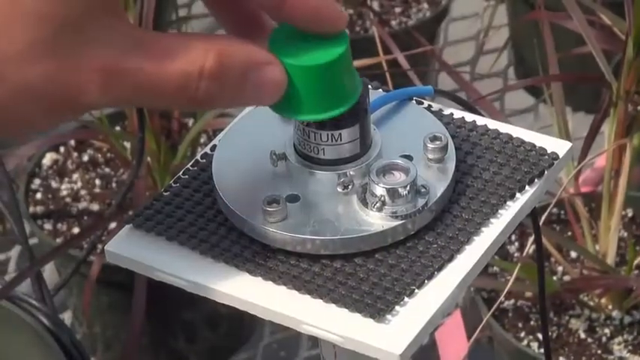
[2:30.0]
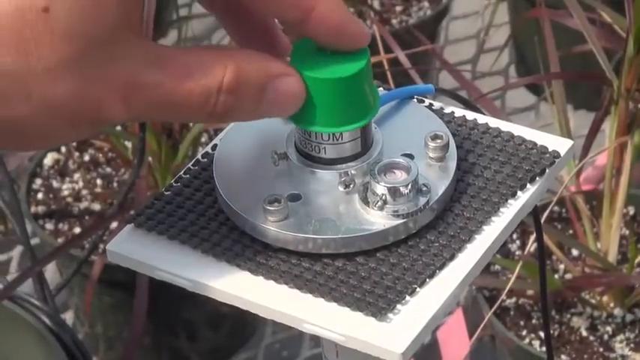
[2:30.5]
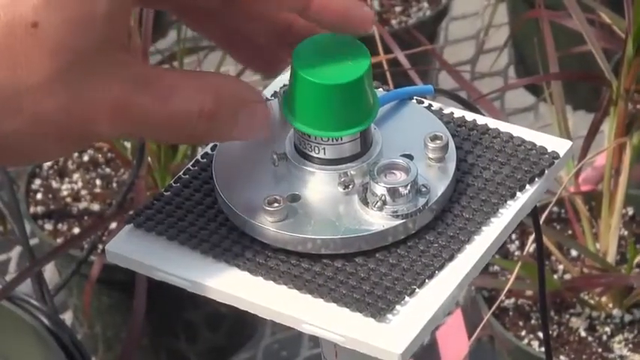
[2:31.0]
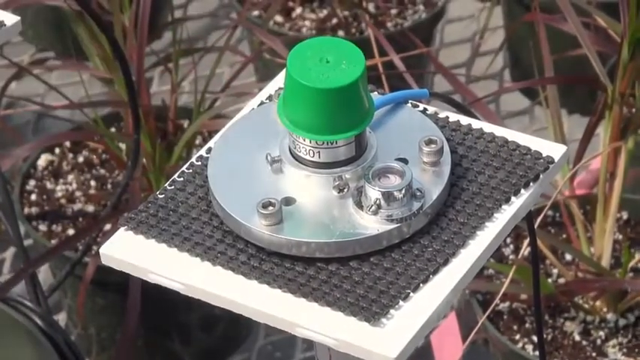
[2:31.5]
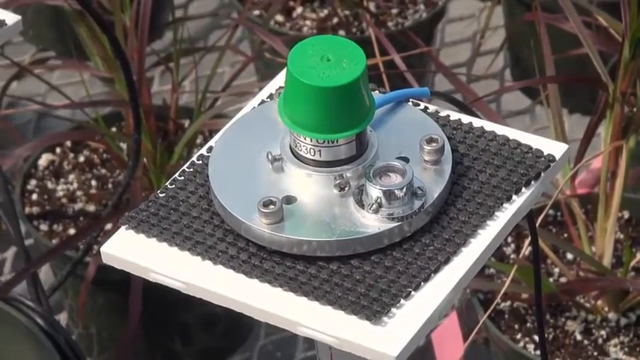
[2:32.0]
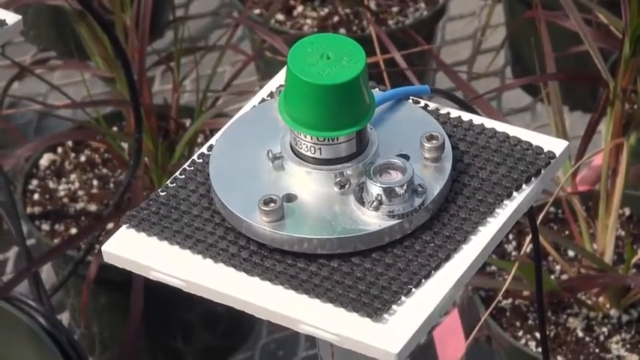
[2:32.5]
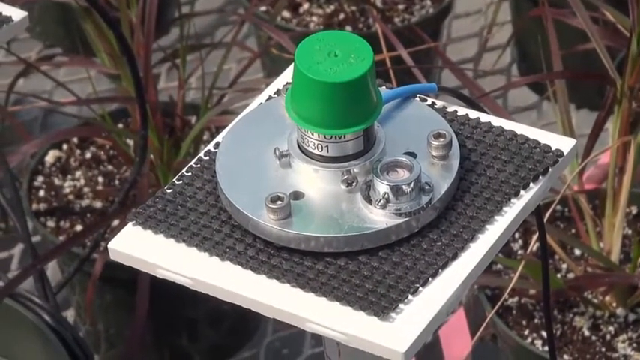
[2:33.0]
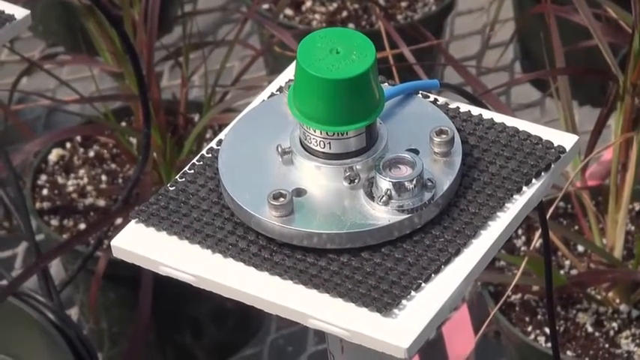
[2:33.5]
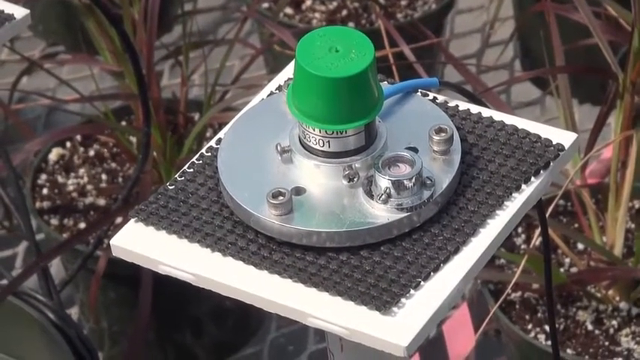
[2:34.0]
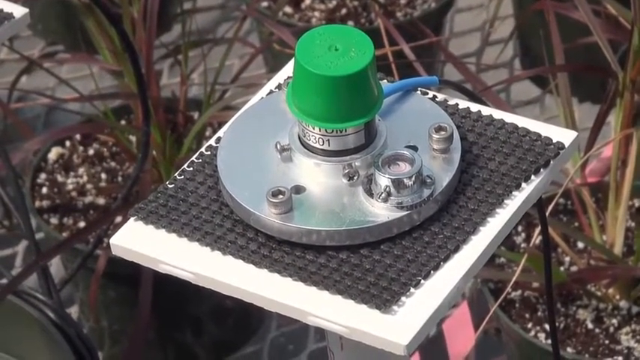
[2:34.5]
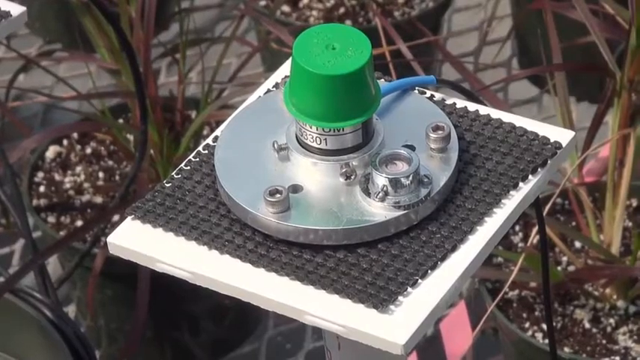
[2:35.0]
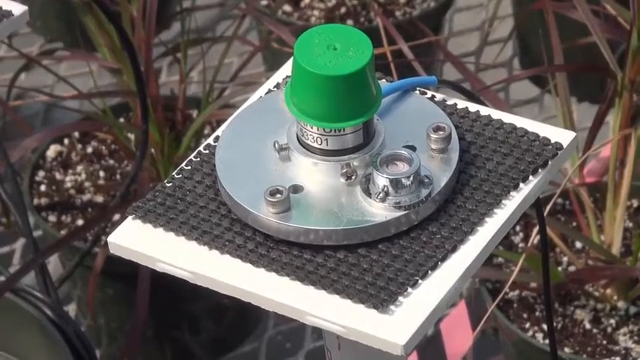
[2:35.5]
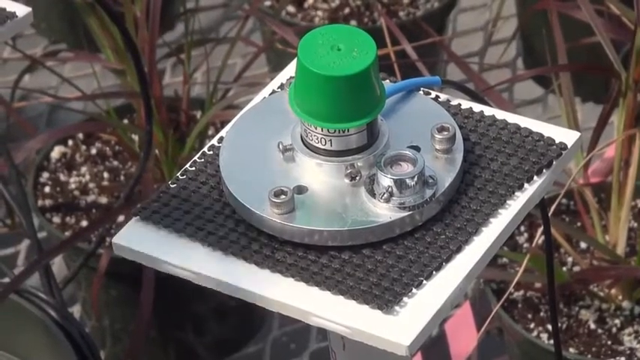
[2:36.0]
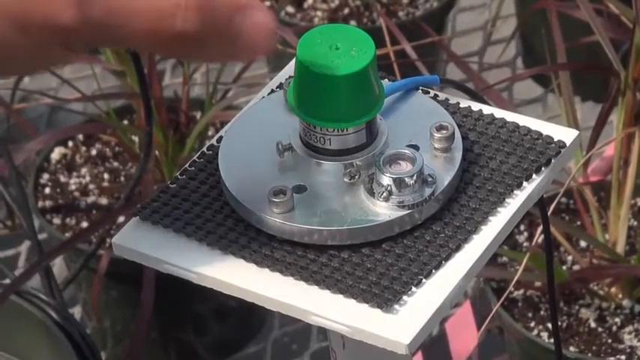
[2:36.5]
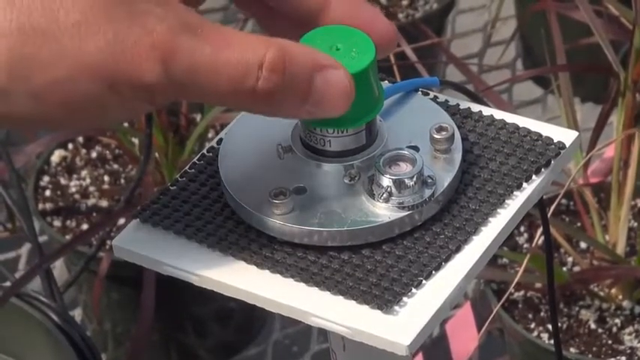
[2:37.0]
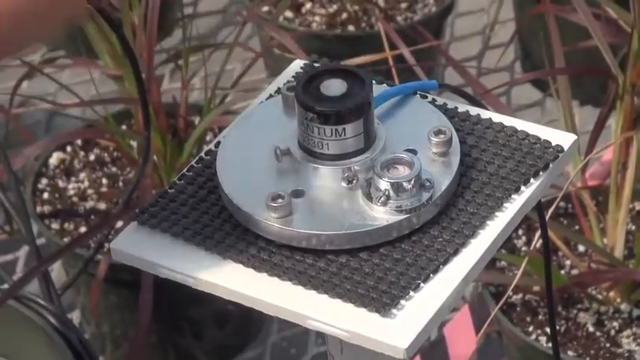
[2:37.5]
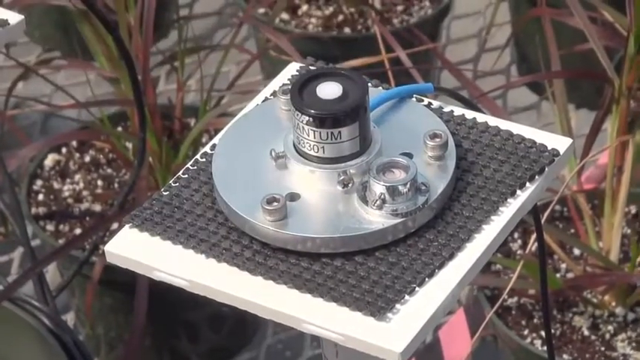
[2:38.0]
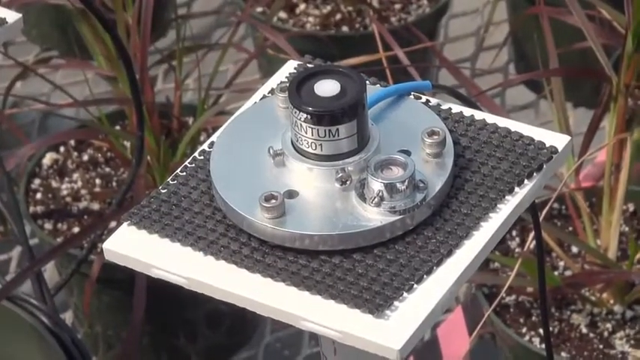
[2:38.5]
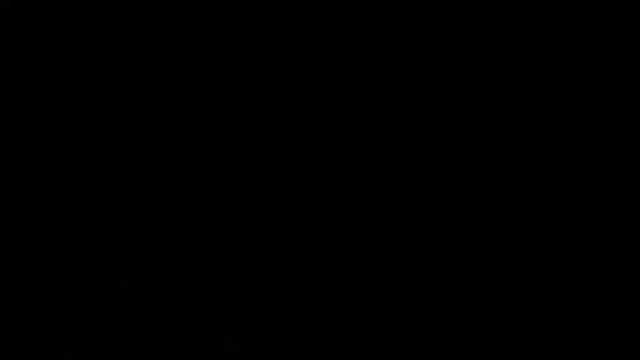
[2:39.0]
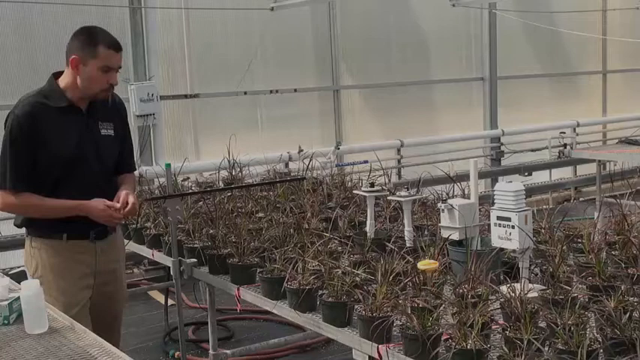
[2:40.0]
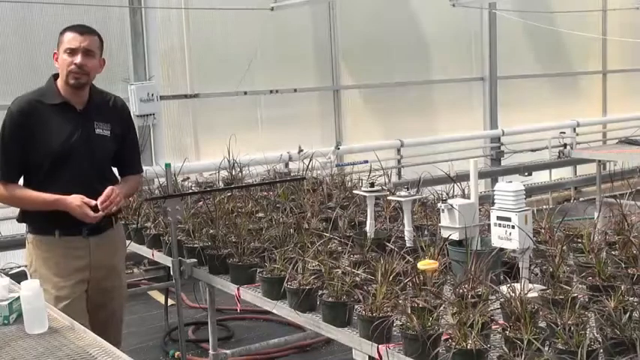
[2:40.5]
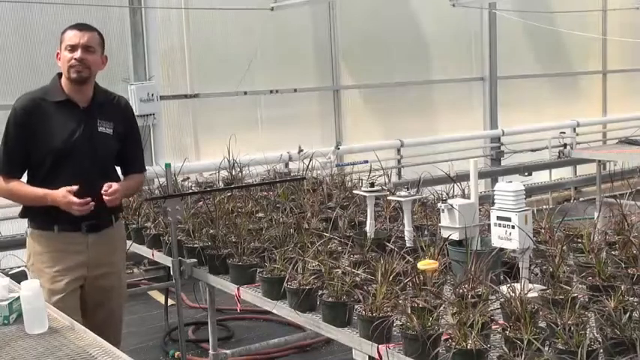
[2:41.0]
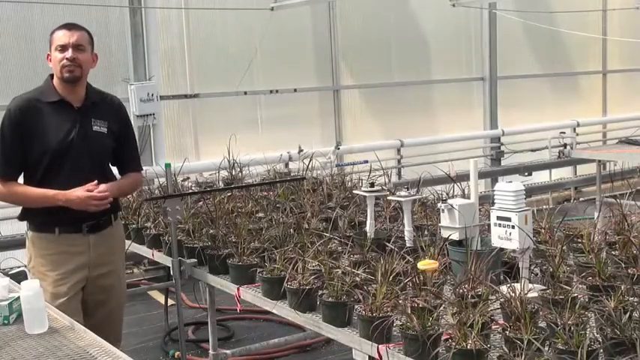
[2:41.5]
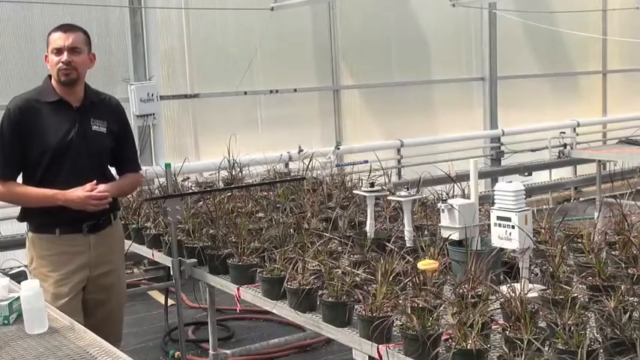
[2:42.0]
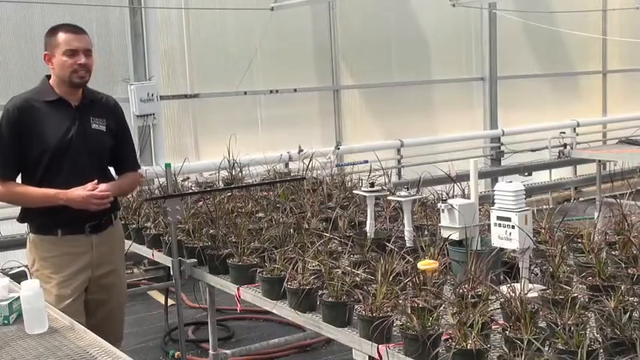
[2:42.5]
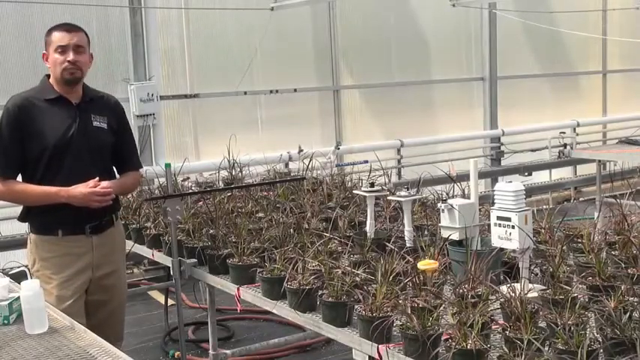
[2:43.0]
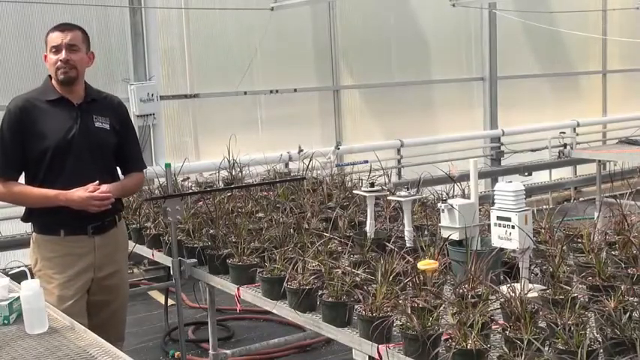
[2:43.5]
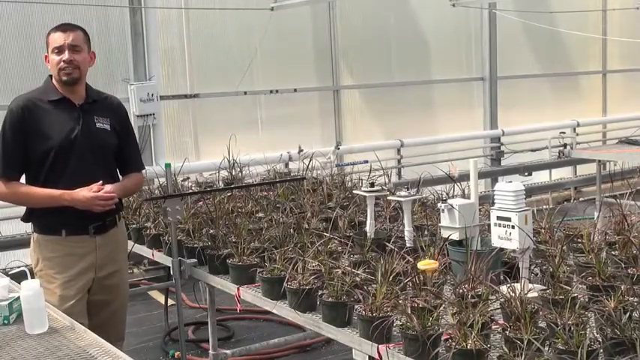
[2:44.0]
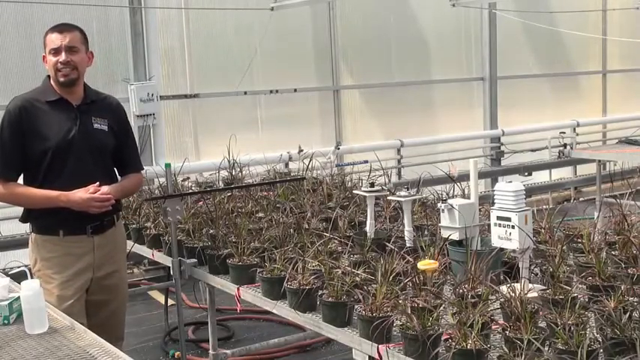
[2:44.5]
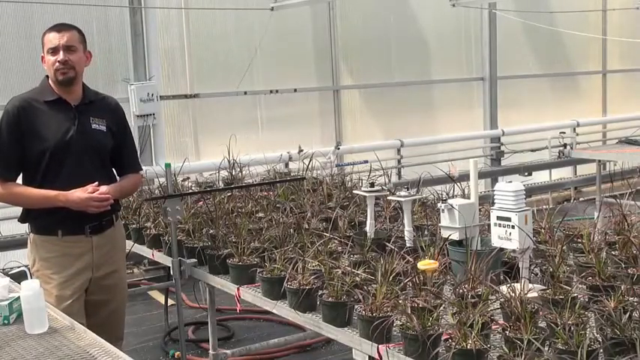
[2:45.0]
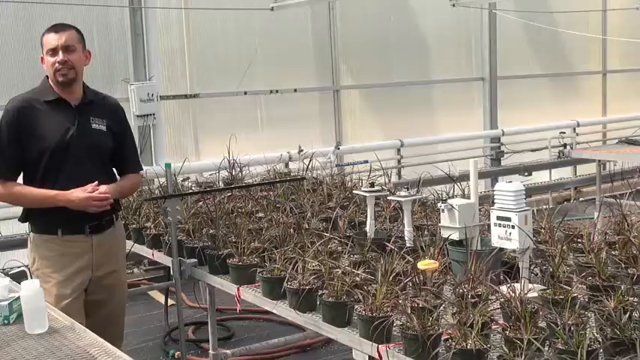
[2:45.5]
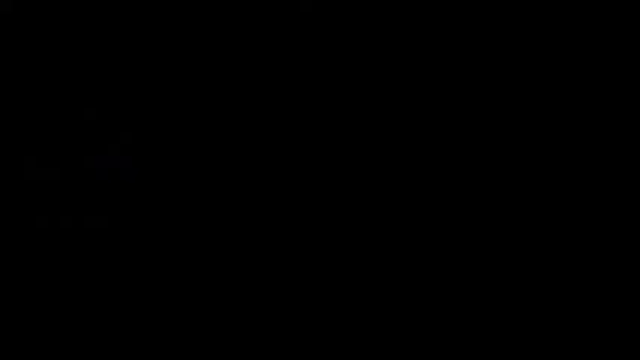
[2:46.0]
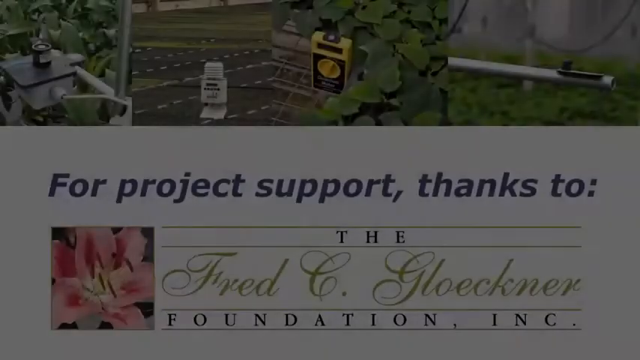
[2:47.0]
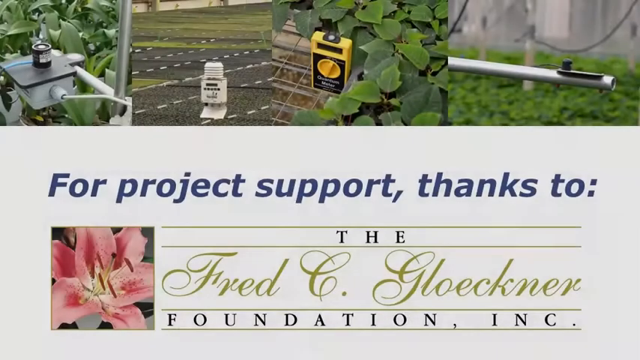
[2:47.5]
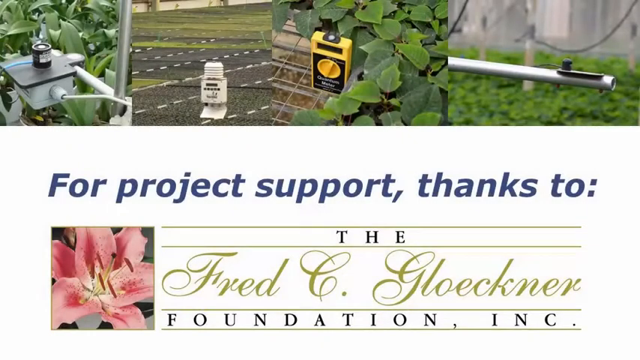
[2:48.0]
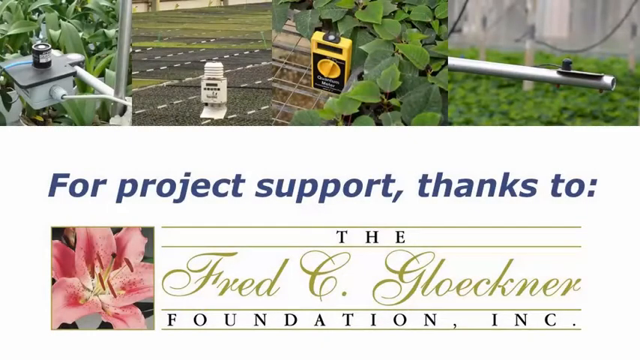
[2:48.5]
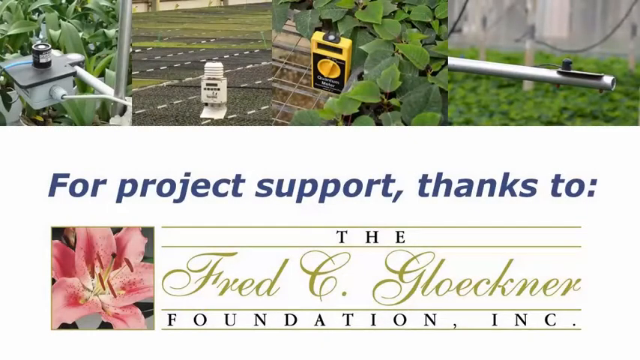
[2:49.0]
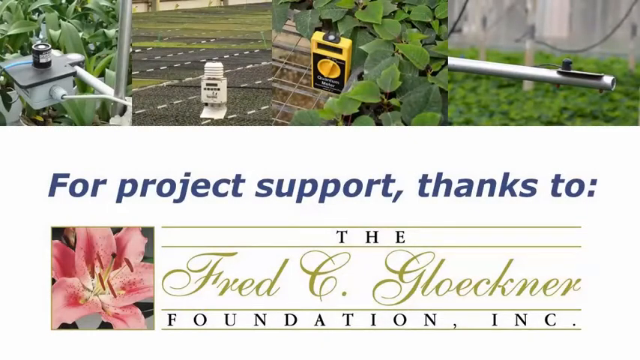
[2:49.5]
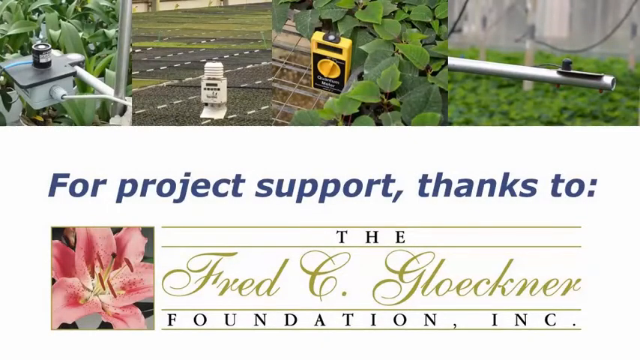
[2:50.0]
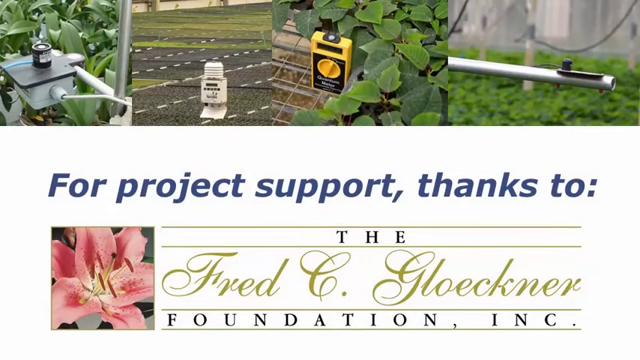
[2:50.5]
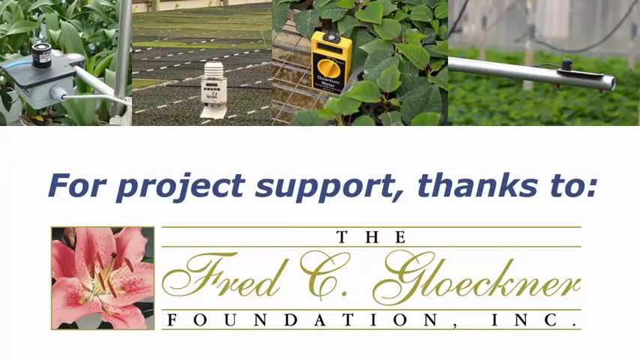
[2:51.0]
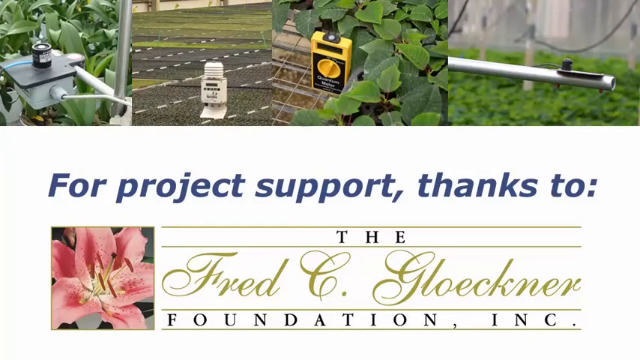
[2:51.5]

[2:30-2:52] The green cap is on top of the area with the word "quantum." His thumb is at the bottom of the green cap, his pointer finger on top, and his middle finger on the left side. He pushes the cap down, moves his hand away for a few seconds, then puts his fingers back on it and removes it, yanking it up with his thumb and pointer finger rather than squeezing it. The screen goes black. The man in the black short-sleeved collared polo shirt appears again and moves his mouth, and the screen goes black again. Blue text reads "for project support, thanks to...", followed by smaller black text. In an olive-greenish script font it reads "Fred C. Gloeckner," and in black it reads "foundation, INK."